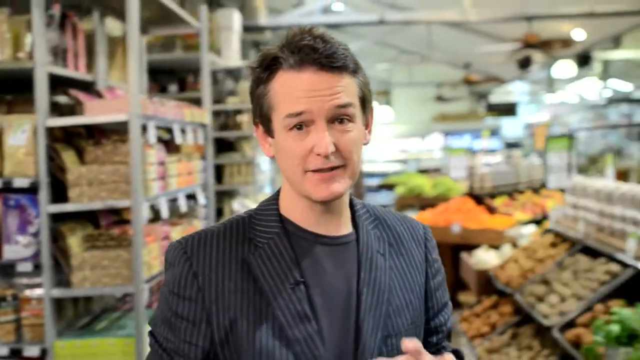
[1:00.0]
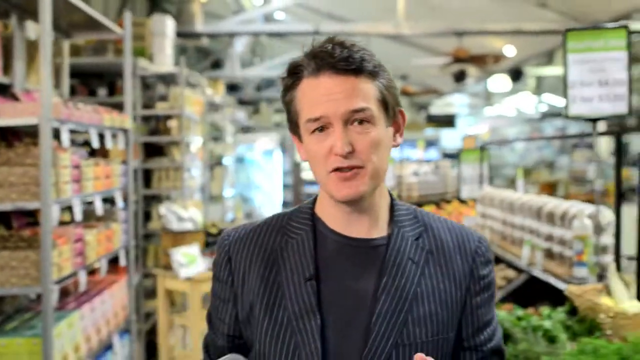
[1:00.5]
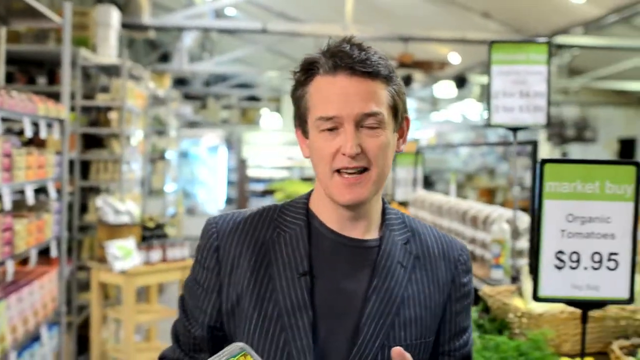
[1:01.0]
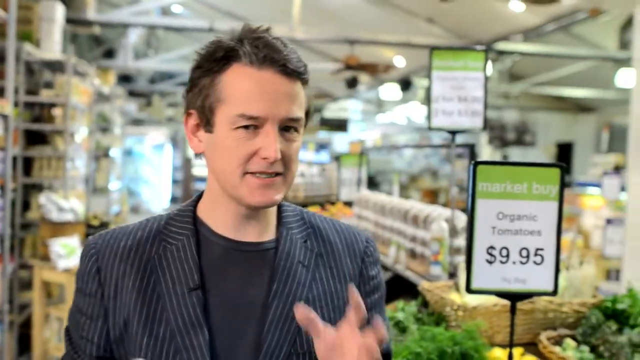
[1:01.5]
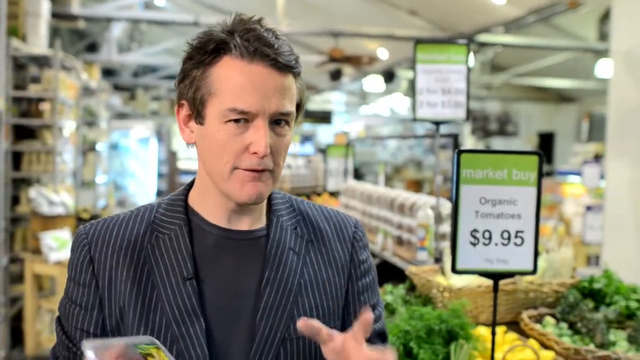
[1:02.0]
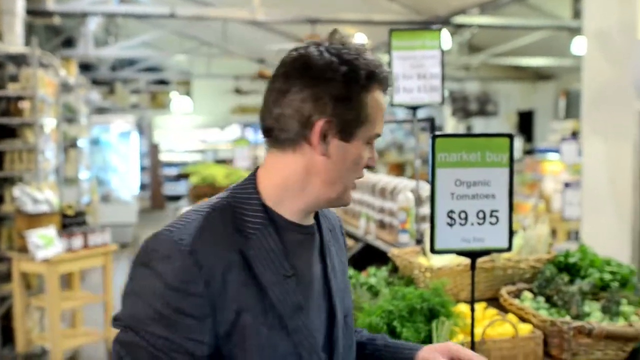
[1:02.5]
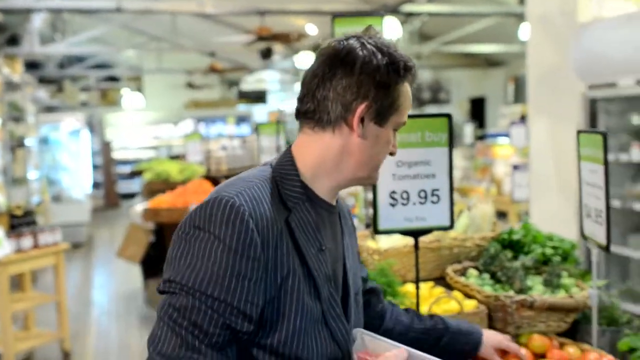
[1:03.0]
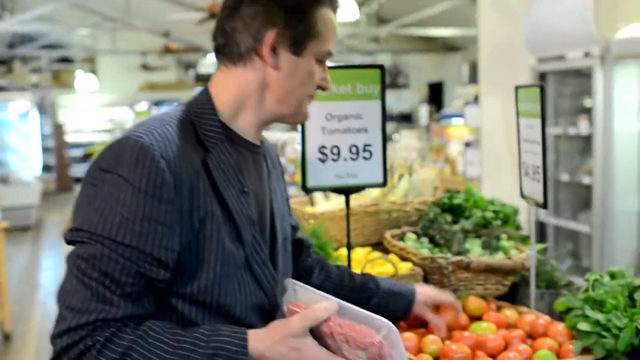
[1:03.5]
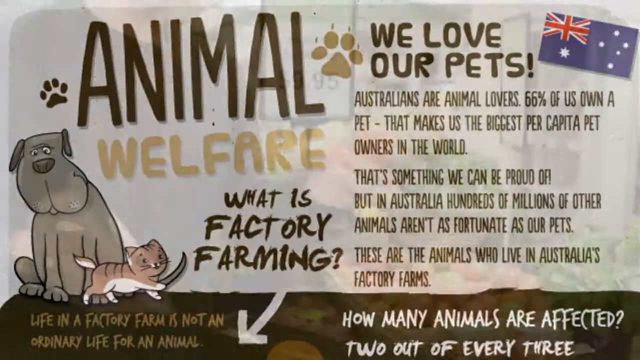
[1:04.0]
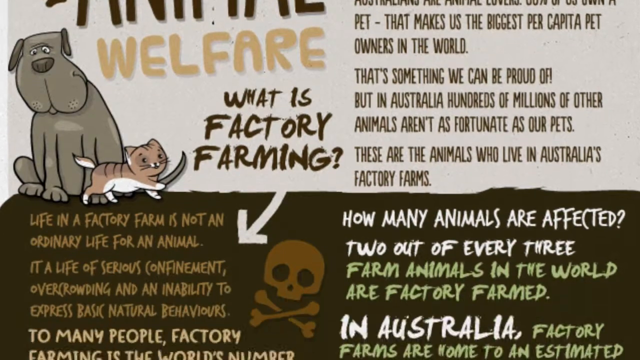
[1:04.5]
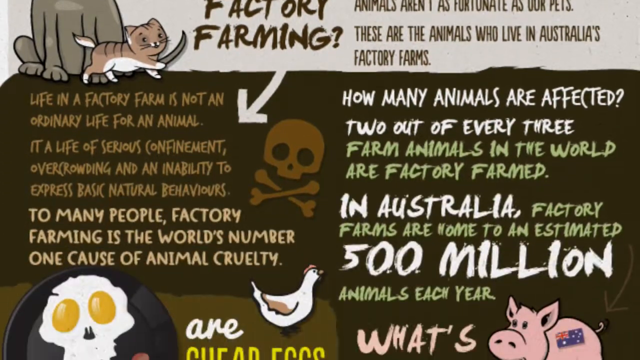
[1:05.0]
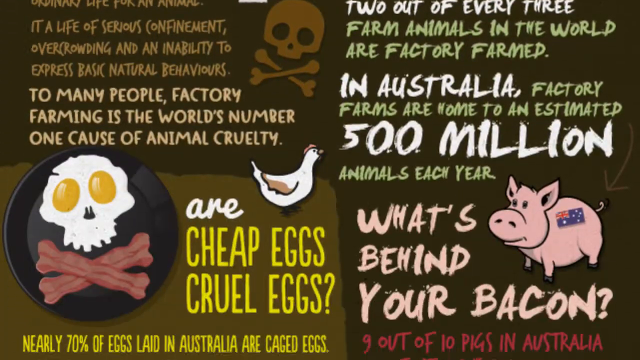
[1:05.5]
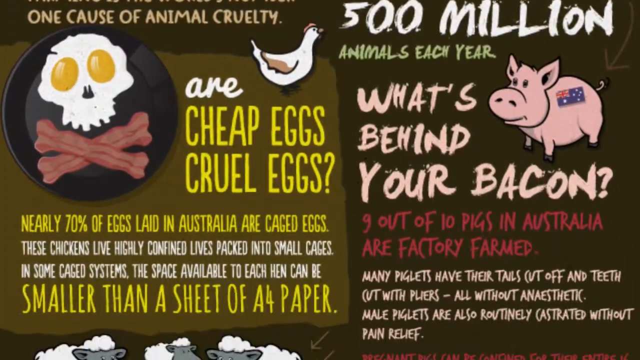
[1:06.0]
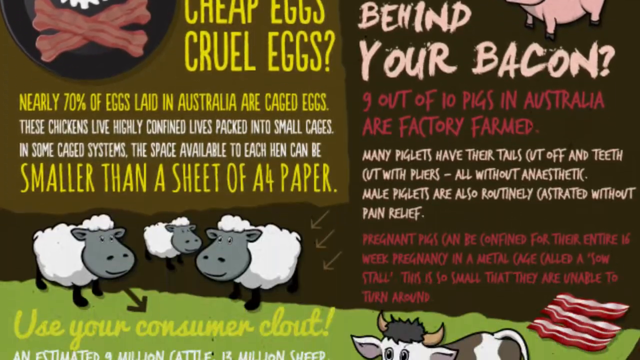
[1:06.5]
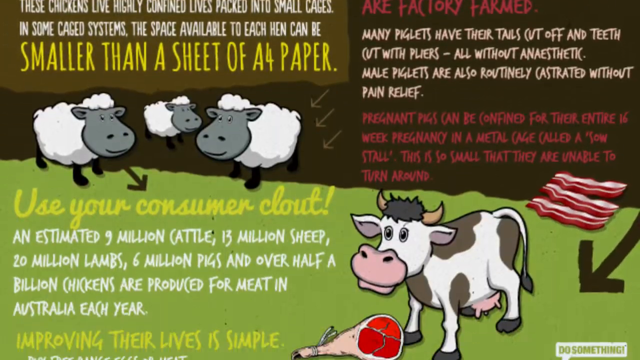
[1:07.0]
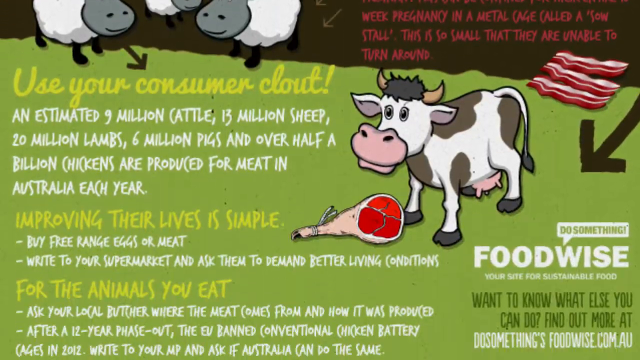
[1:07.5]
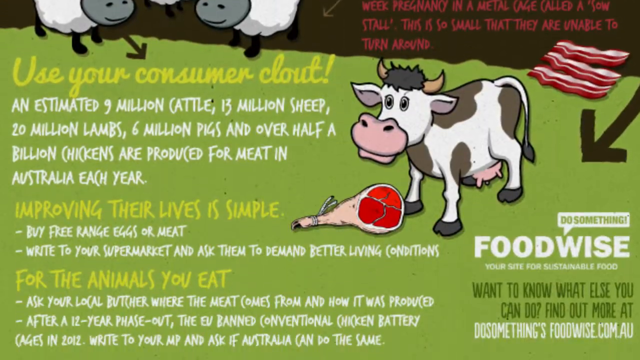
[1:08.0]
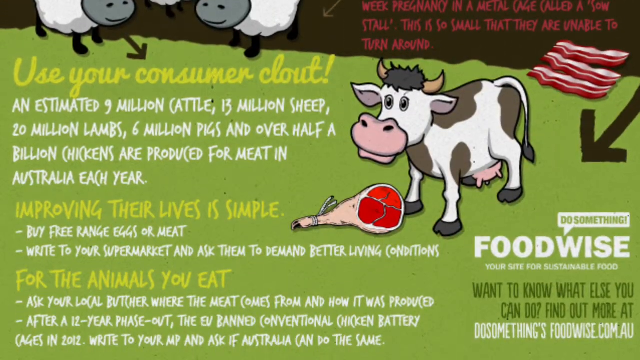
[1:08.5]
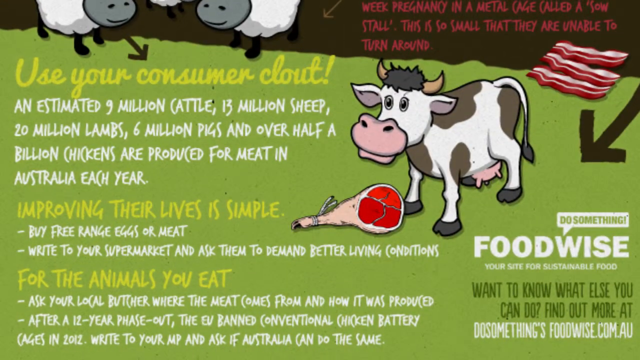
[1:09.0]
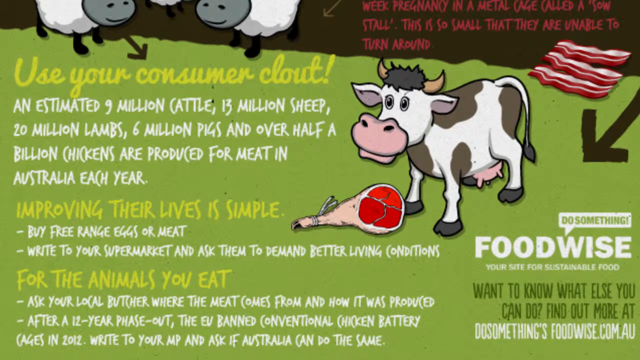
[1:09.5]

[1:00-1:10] The host comes out of an aisle. Behind him are various signs for the different products in the store; the most visible one says "market buy organic tomatoes, $9.95". The host turns around to pick up one of the tomatoes. The scene then transitions back to the poster from before, which says "animal welfare, what is factory farming?" It also says "we love our pets. Australians are animal lovers. 66% of us own a pet. That makes us the biggest per capita pet owners in the world." and "But in Australia, hundreds of millions of other animals aren't as fortunate as our pets. These are the animals who live in Australia's factory farms."